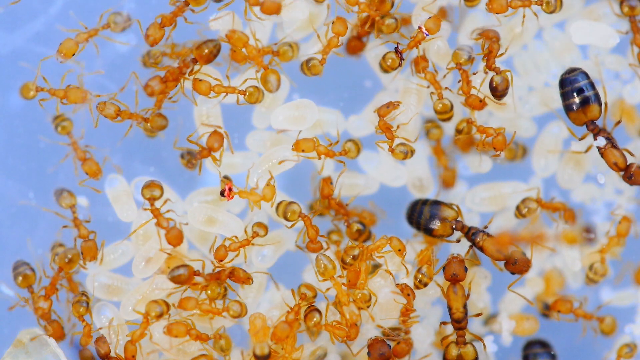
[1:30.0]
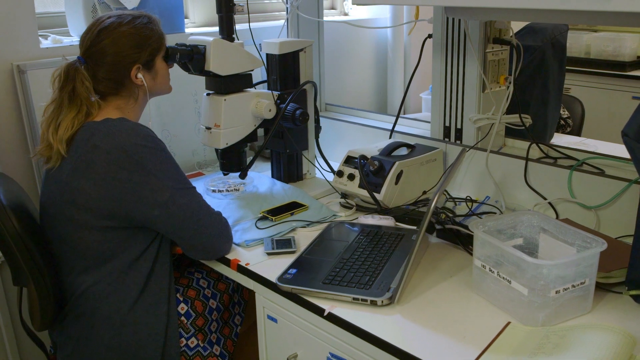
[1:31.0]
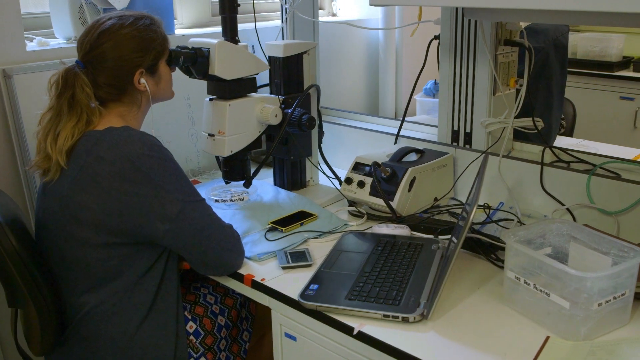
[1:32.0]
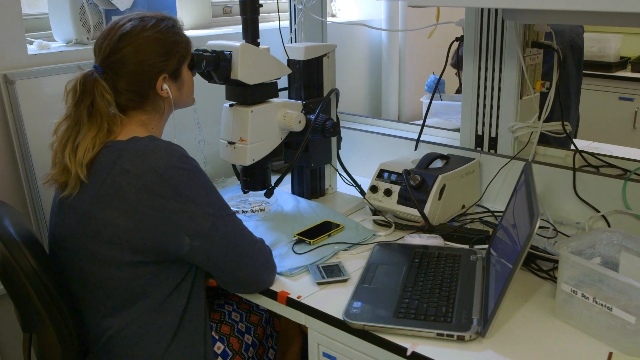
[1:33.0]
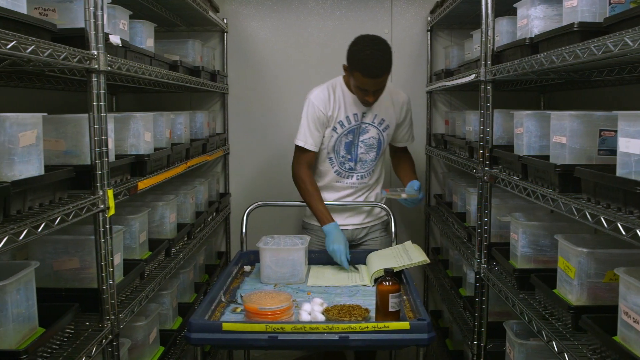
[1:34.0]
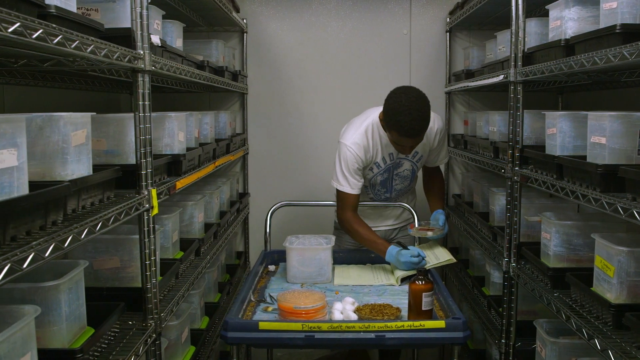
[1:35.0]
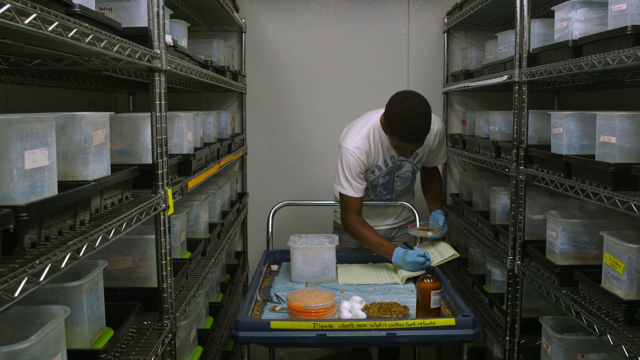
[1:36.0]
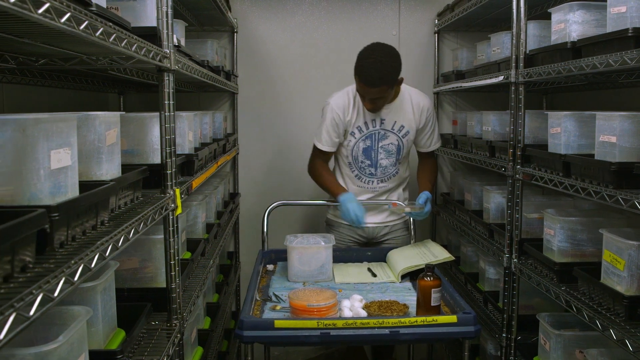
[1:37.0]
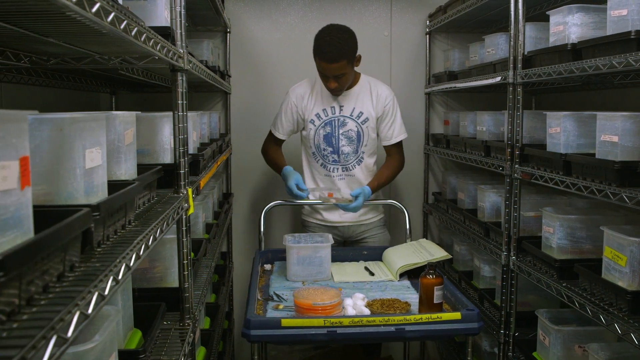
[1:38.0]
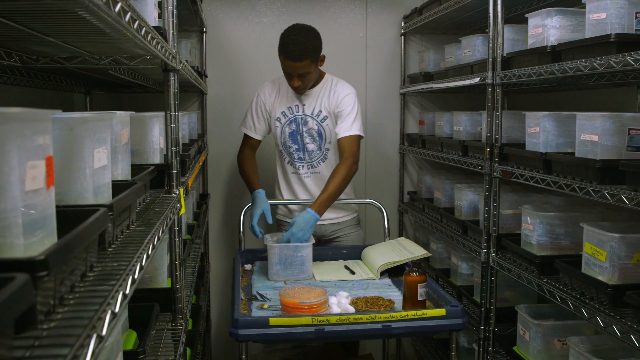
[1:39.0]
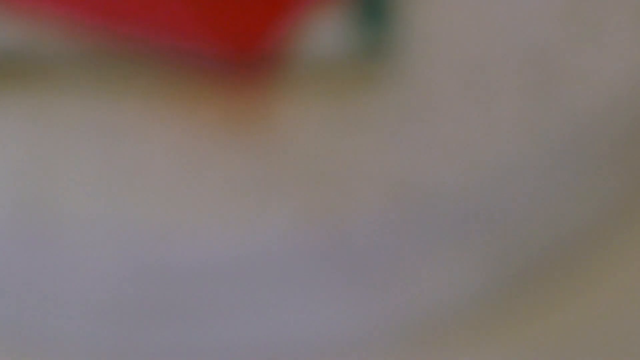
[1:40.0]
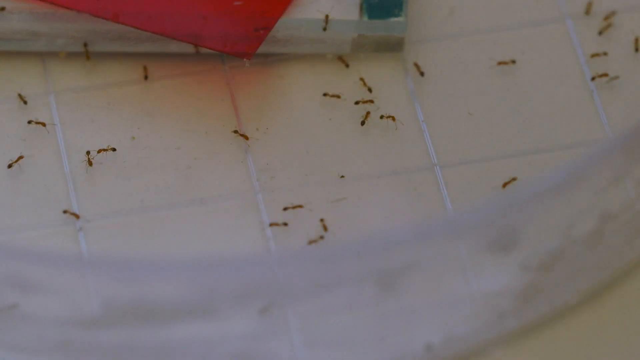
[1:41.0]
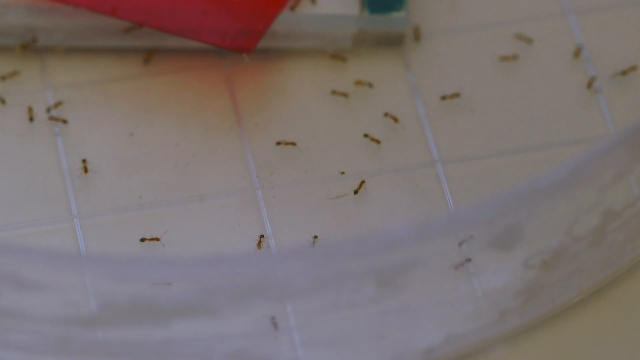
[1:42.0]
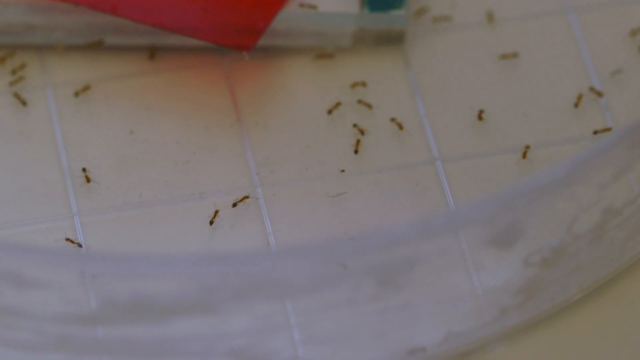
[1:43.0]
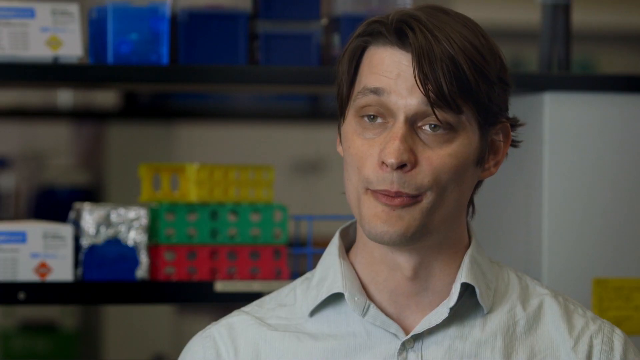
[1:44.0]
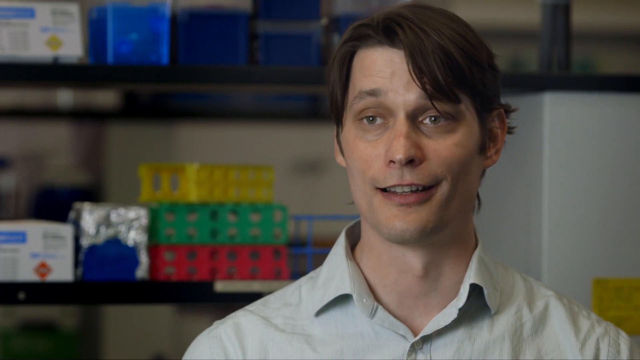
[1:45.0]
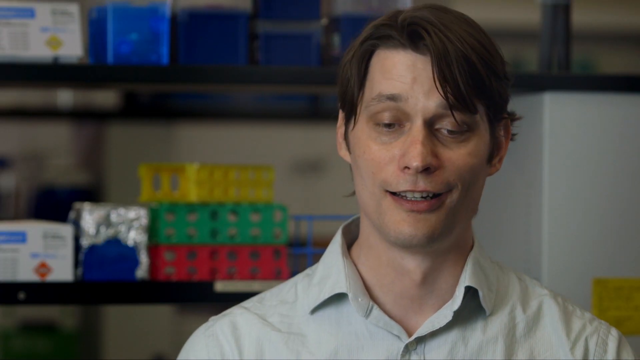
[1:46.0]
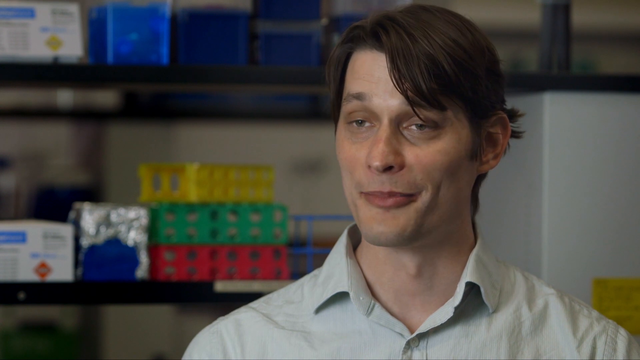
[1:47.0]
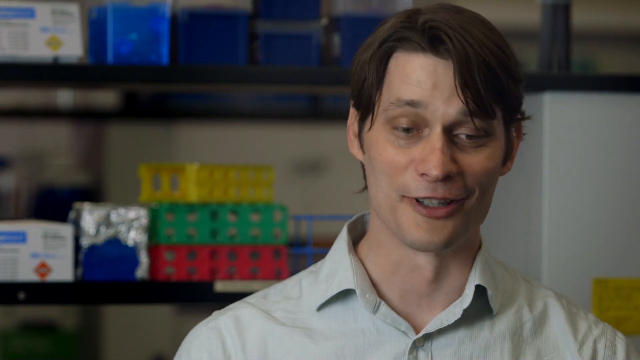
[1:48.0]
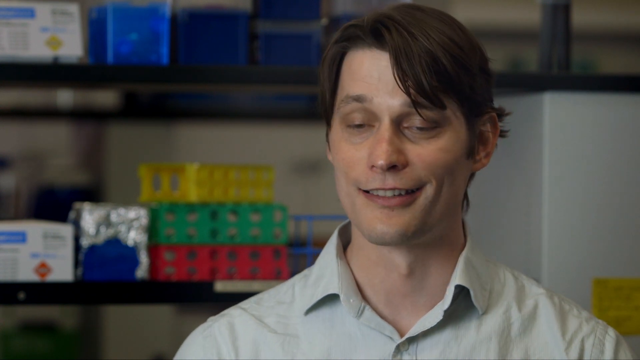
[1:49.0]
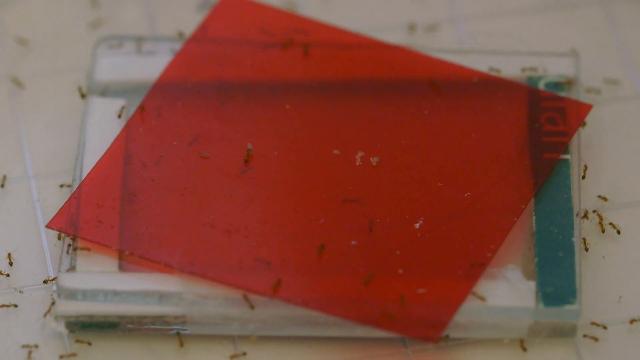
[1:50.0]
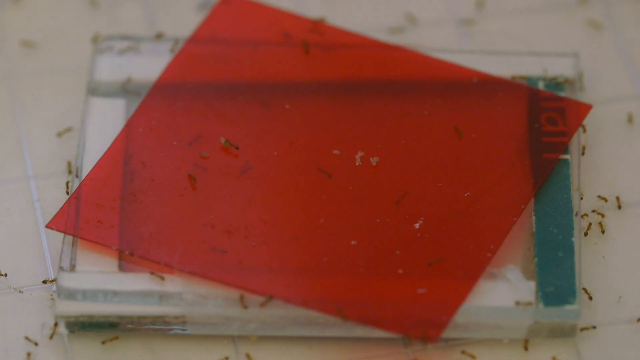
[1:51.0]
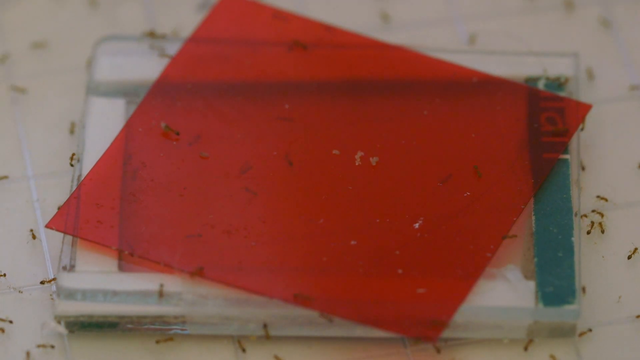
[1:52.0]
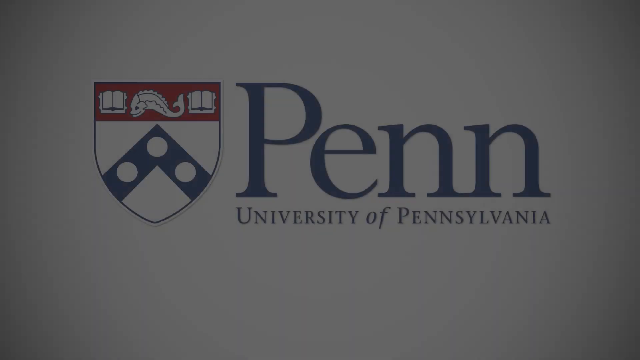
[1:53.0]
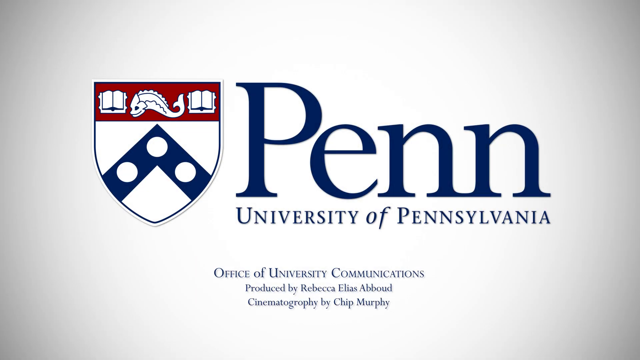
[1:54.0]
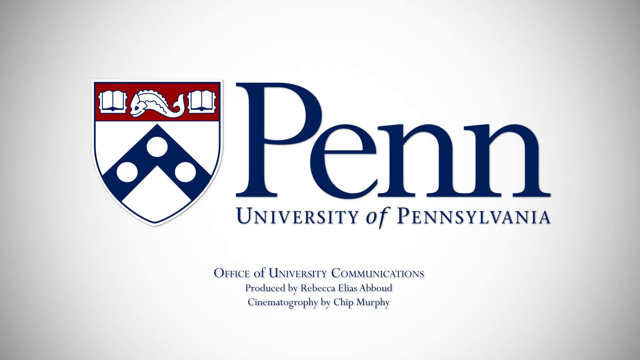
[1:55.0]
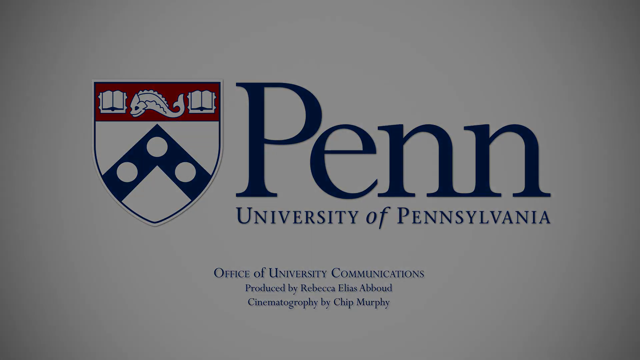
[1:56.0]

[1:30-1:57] An overhead image looks down on almost transparent amber-colored ants. On the right-hand side, two of them have swollen back sections banded with dark blue and amber. The ants seem to be on top of a pile of white, almost translucent eggs, all on a light blue background. The image switches to a woman on the left-hand side of the screen with dirty blonde hair pulled back in a ponytail, wearing a blue sweater and earphones. She sits upright at a desk looking into a microscope at eye level. Next, a young Black man wears a white t-shirt, blue gloves and light-colored pants. He stands in a narrow space in a storeroom with metal shelves on either side. In front of him is a tray, a rolling cart, with an open book on it that he is looking at. All of the shelves are lined with rectangular, deep, white plastic containers, none with lids. His t-shirt says "Proof Lab." The camera pans to a view of ants on a white tiled surface, apparently in a petri dish. The man talking to the camera appears again; he smiles as he talks, moves his head from side to side, and seems happy and relaxed. Lastly, ants crawl across the surface, followed by the university emblem for Penn, the University of Pennsylvania, with text reading "Office of University Communications," "produced by Rebecca Elias-Abboud" and "Cinematography by Chip Murphy."